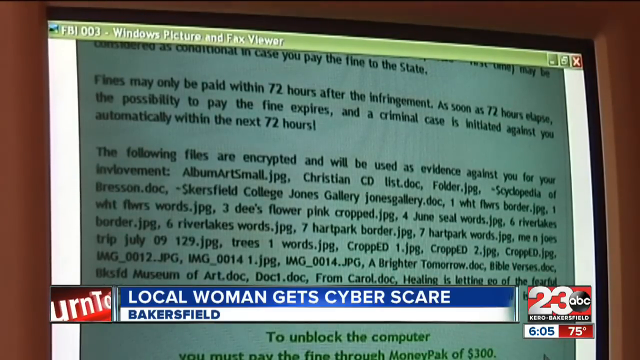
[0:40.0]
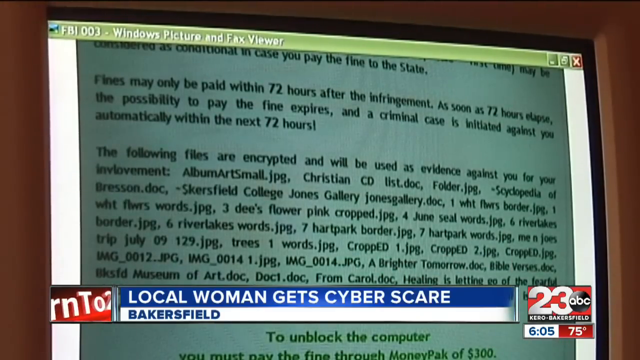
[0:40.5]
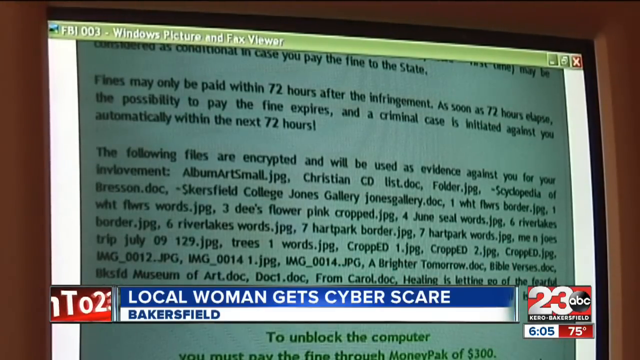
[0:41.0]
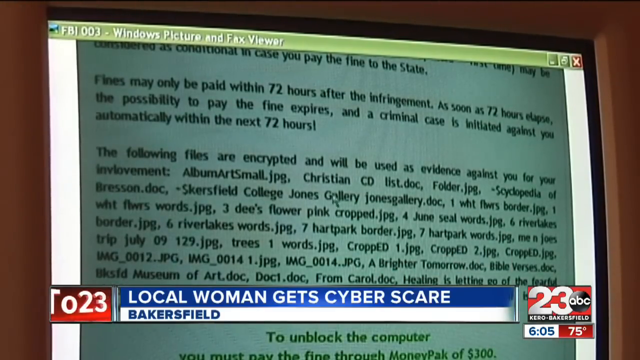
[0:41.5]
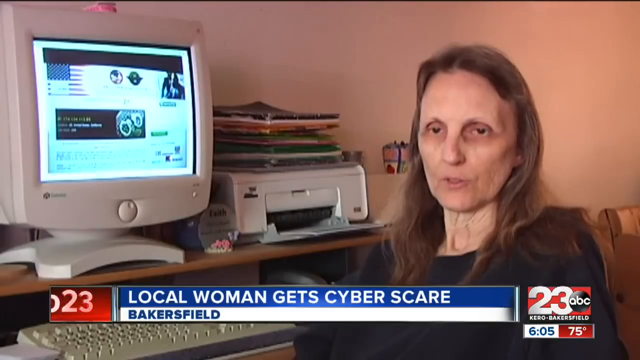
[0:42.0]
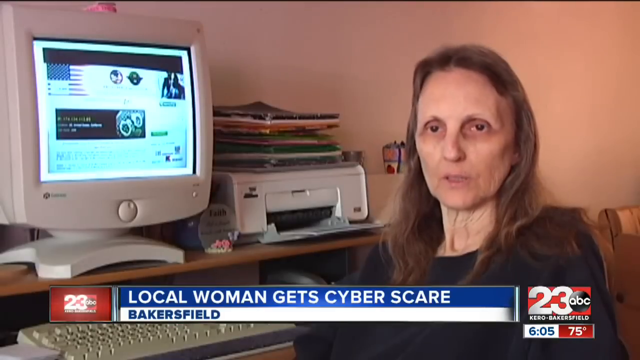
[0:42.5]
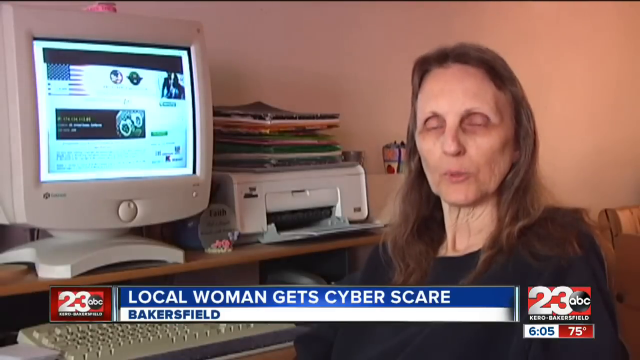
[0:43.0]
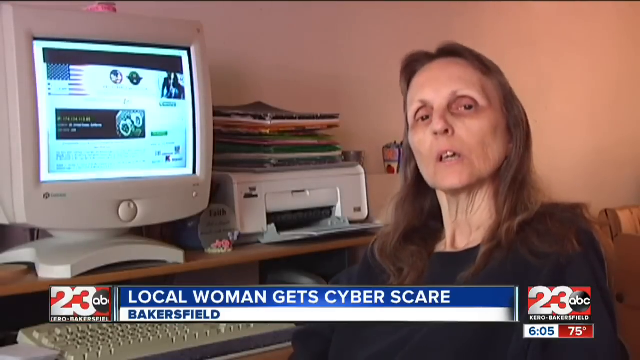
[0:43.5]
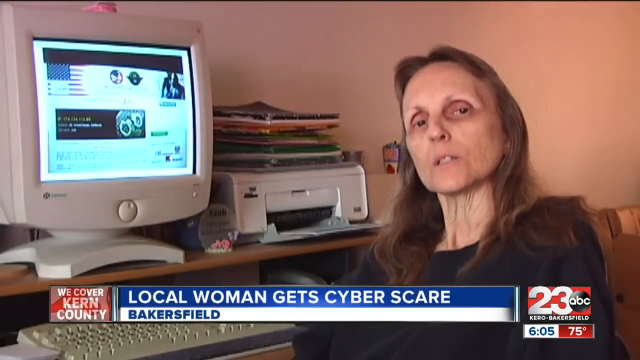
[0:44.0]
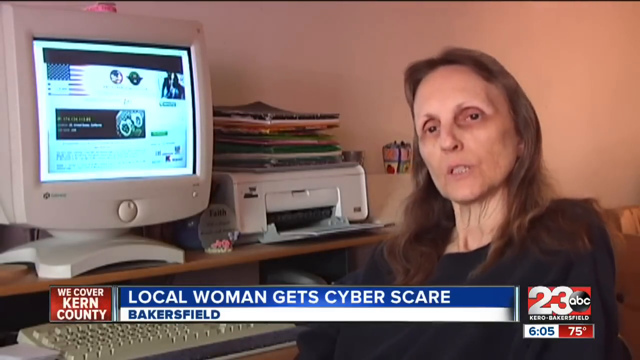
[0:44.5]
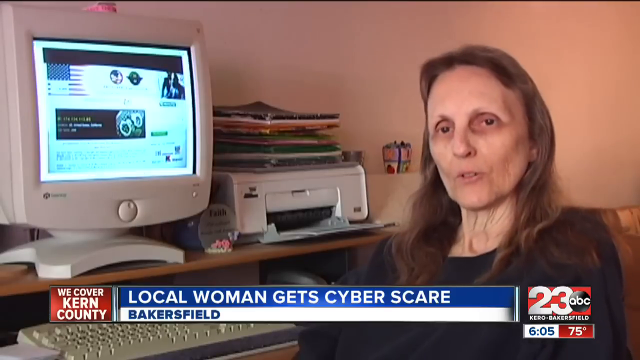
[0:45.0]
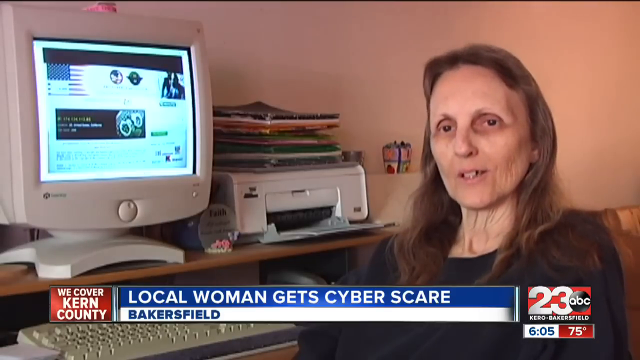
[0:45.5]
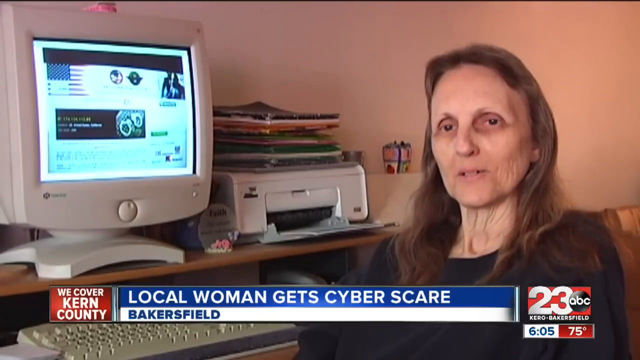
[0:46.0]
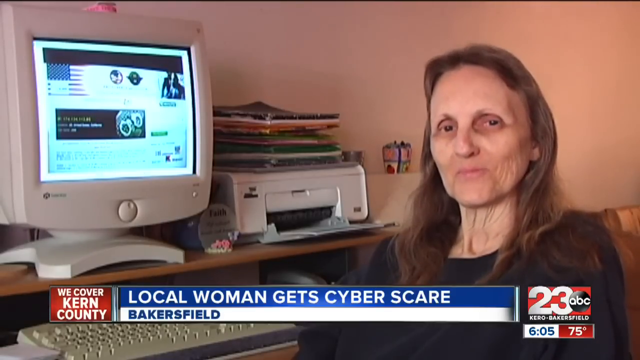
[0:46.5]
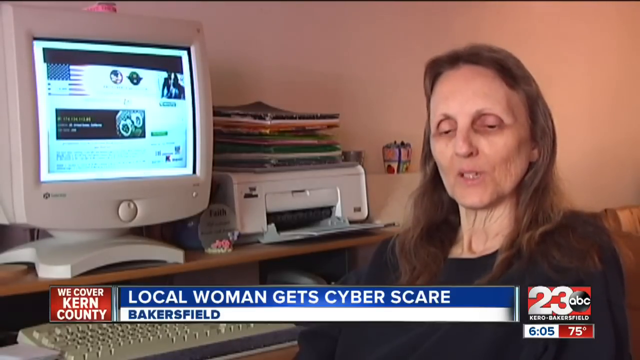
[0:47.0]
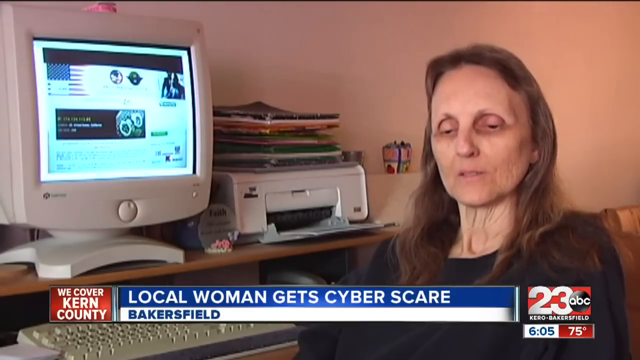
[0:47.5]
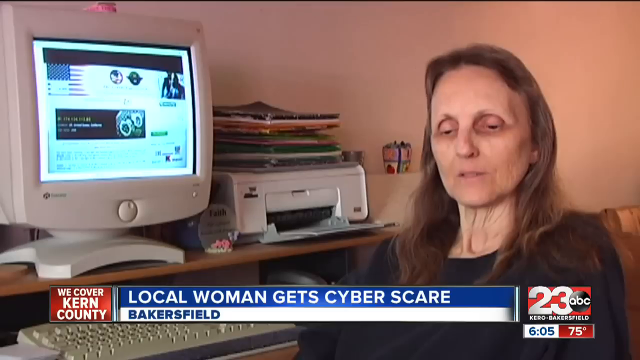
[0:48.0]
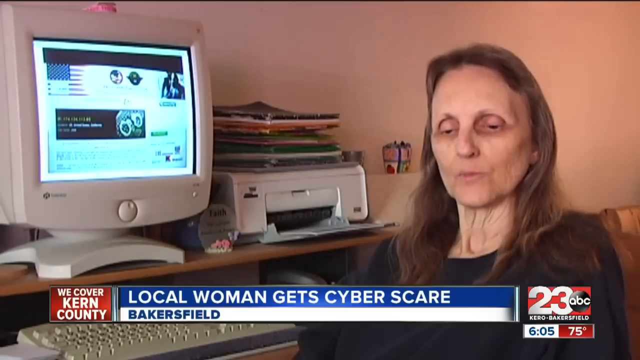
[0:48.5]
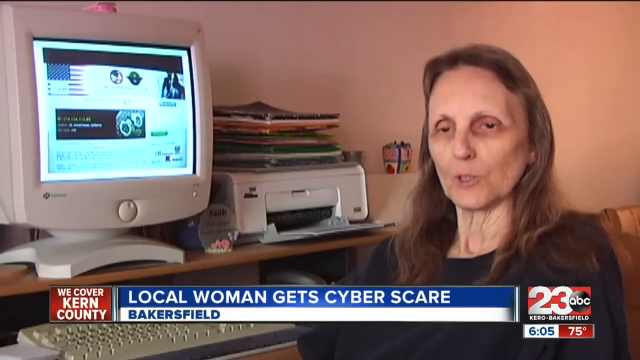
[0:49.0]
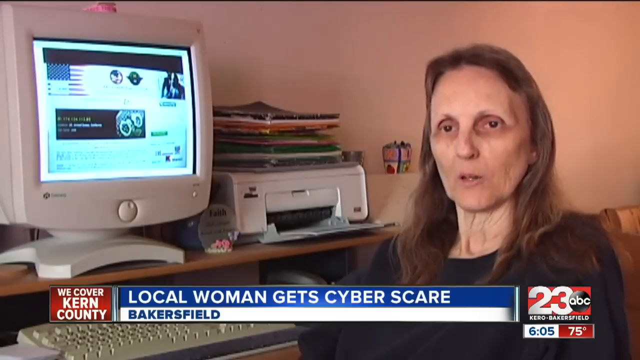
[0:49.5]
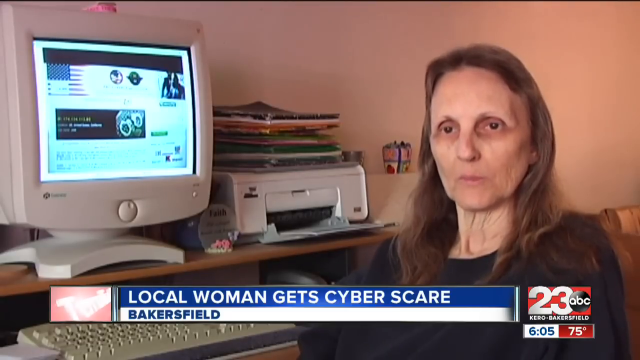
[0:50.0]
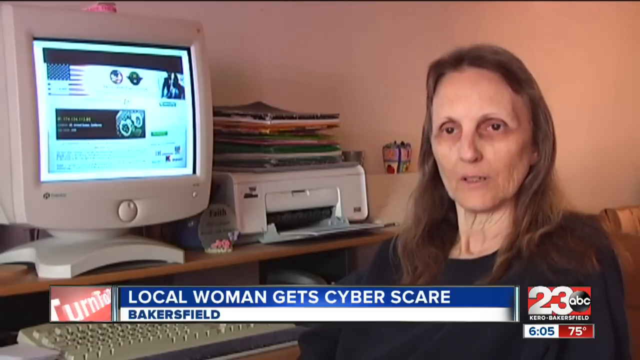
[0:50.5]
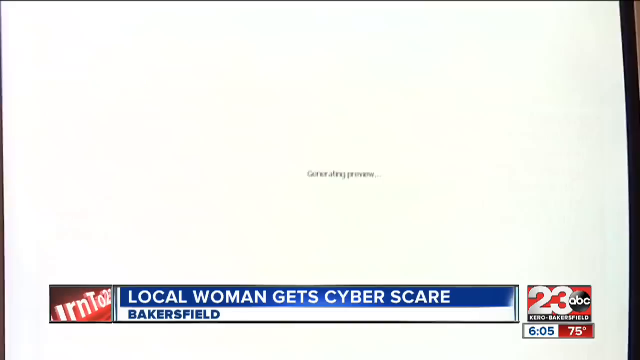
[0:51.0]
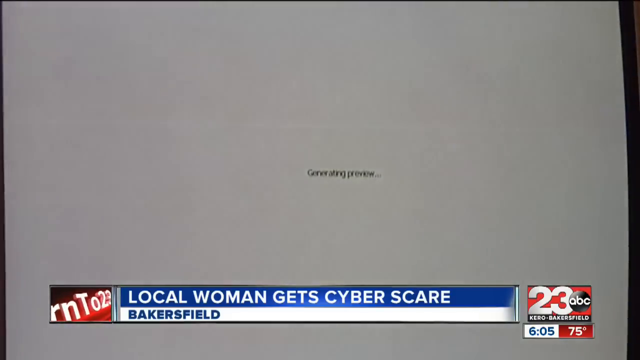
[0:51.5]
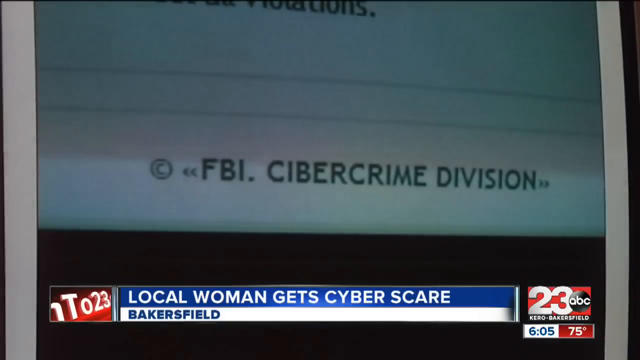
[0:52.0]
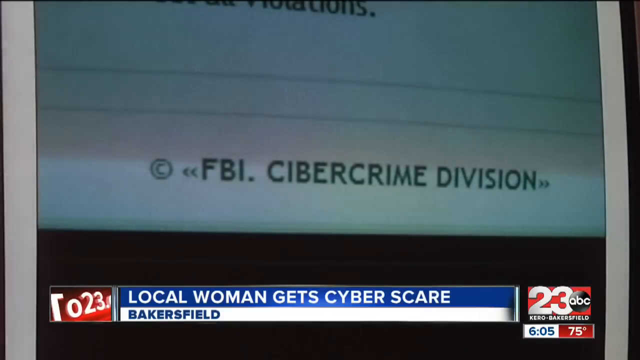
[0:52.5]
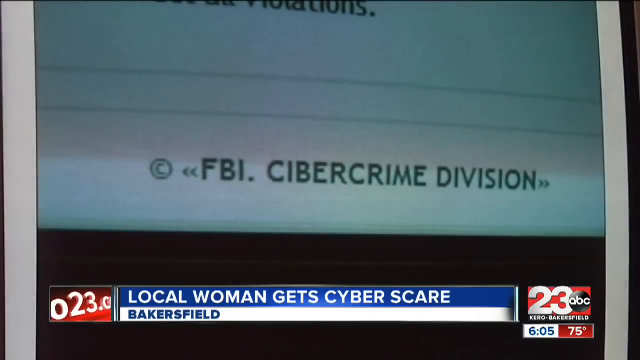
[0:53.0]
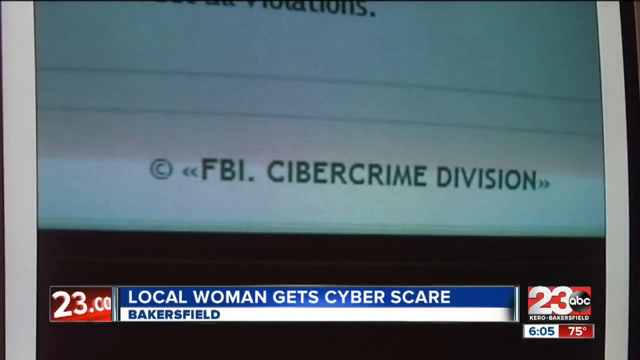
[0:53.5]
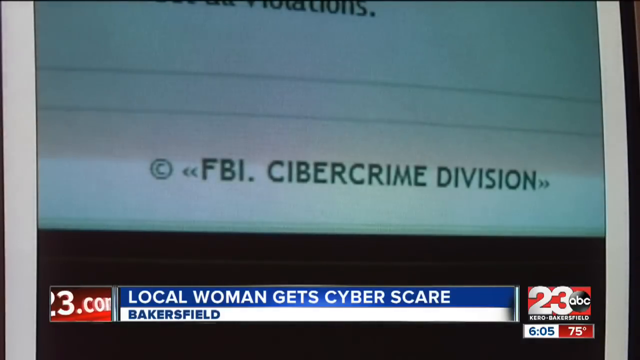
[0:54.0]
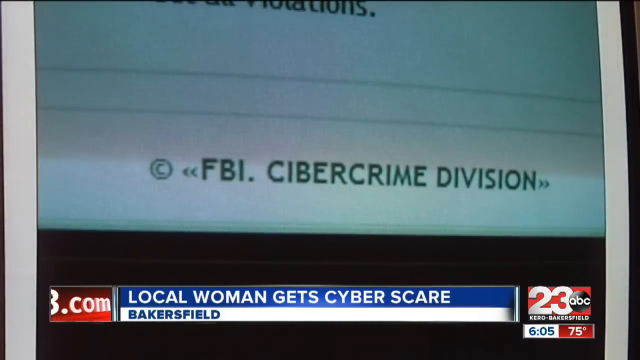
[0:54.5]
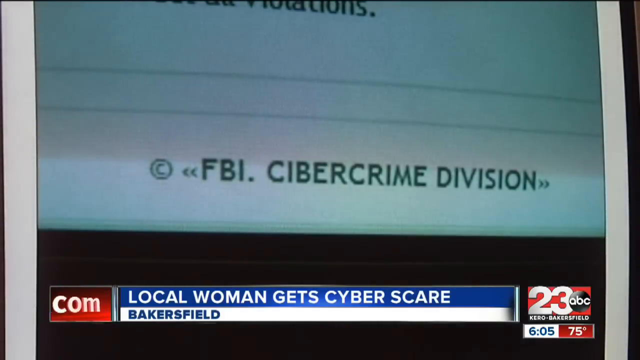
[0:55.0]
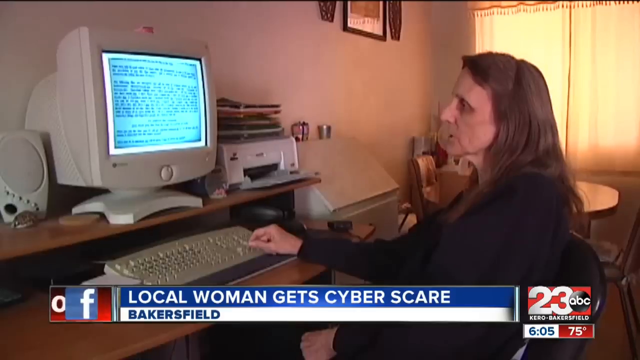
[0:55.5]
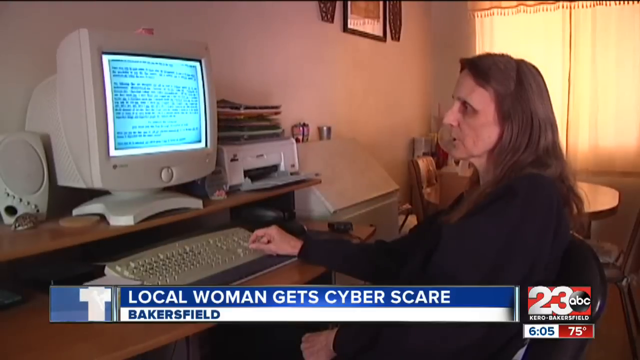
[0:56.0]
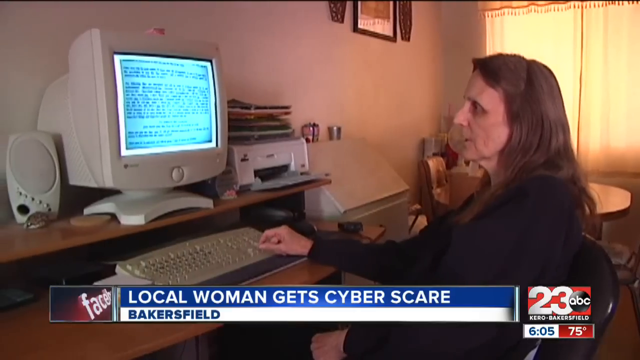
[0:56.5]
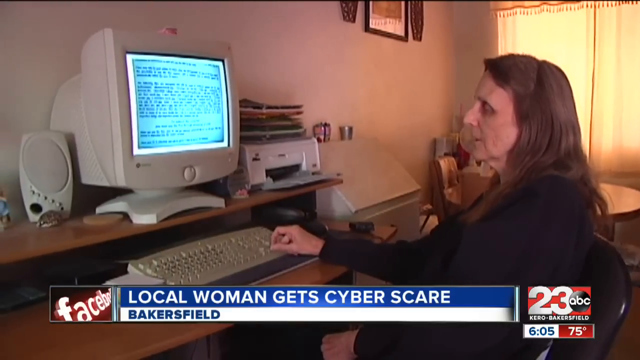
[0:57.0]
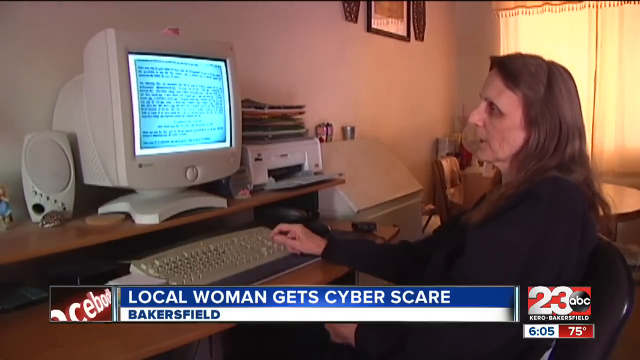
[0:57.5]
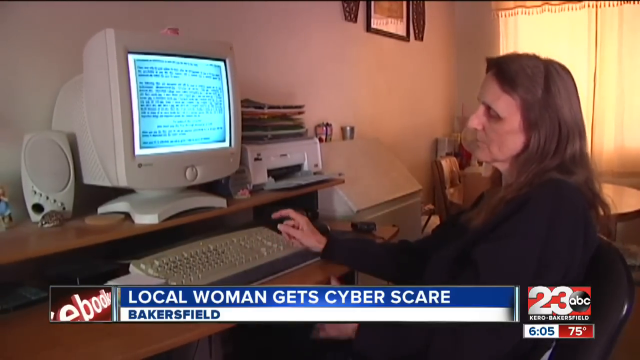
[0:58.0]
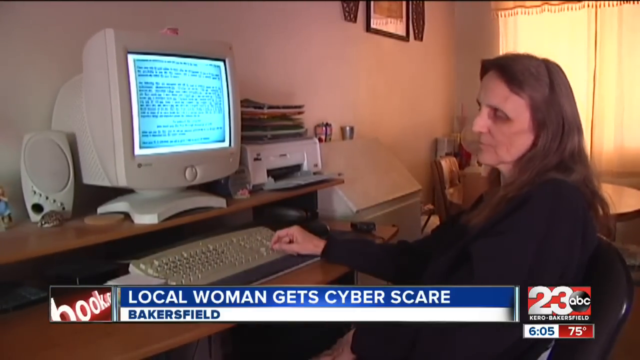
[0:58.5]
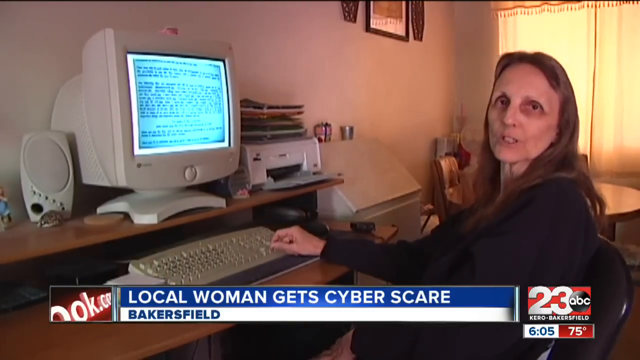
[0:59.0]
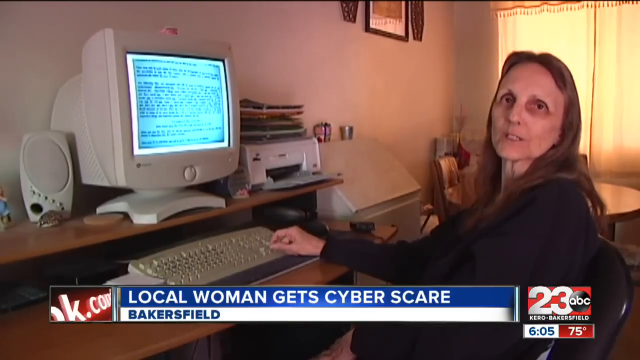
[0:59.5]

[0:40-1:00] The Kero Bakersfield and 23 ABC logo remains in the lower right-hand corner of the screen, with the time, 6:05, and the temperature, 75, underneath. At the bottom middle, the headline reads "Local woman gets cyber scare," with "Bakersfield" underneath. The scene is in a person's living room, looking at a computer screen, which reads in part: "This may only be paid within 72 hours after the infringement. As soon as 72 hours lapse, the possibility to pay the fine expires, and a criminal case is initiated against you automatically within the next 72 hours."